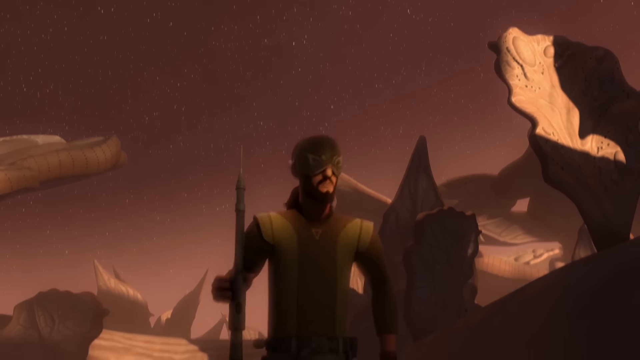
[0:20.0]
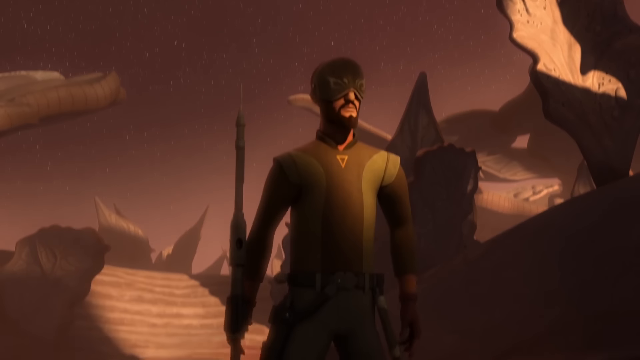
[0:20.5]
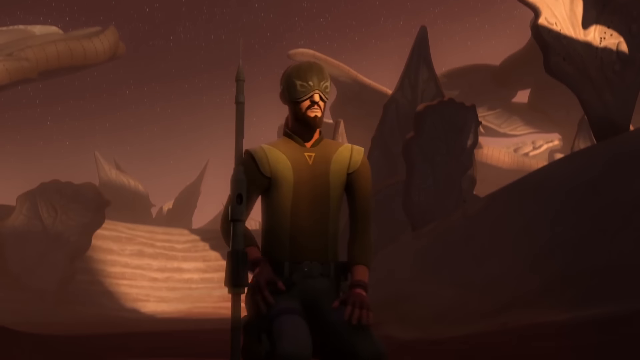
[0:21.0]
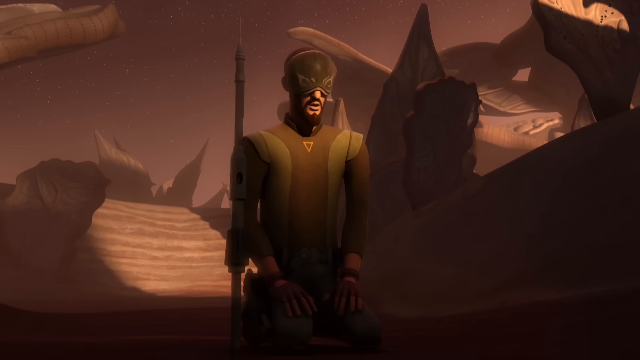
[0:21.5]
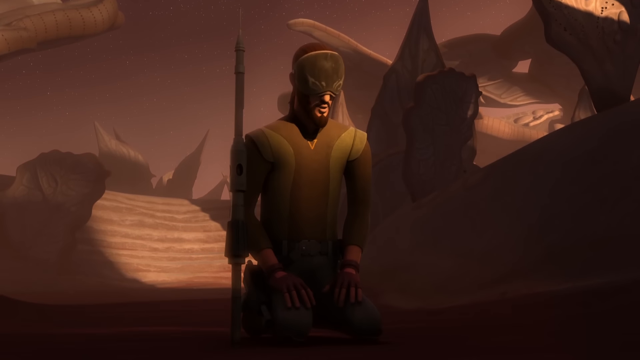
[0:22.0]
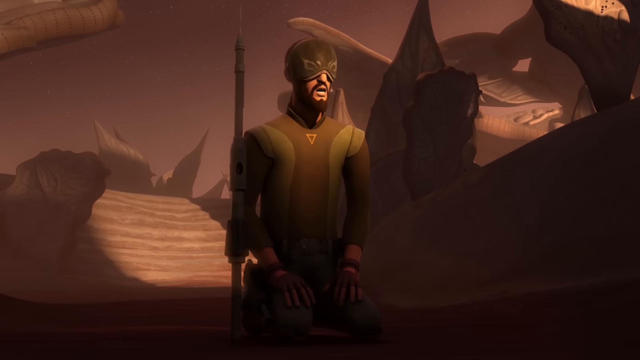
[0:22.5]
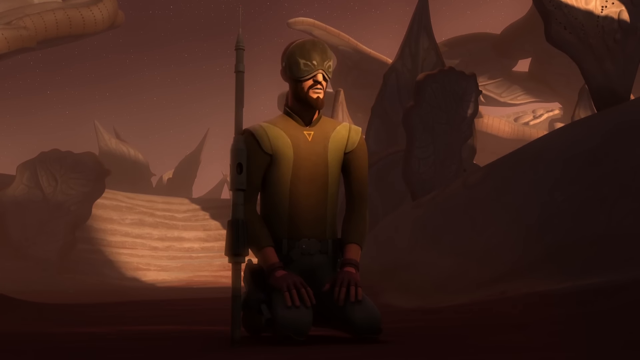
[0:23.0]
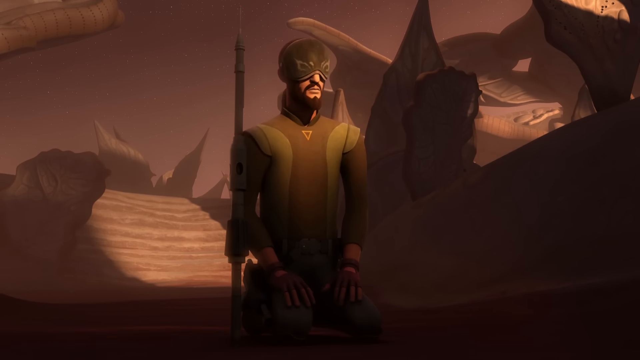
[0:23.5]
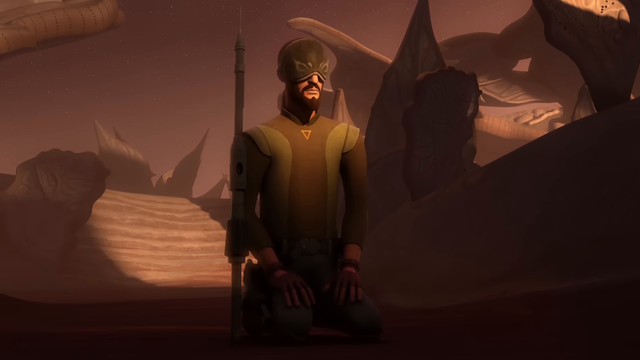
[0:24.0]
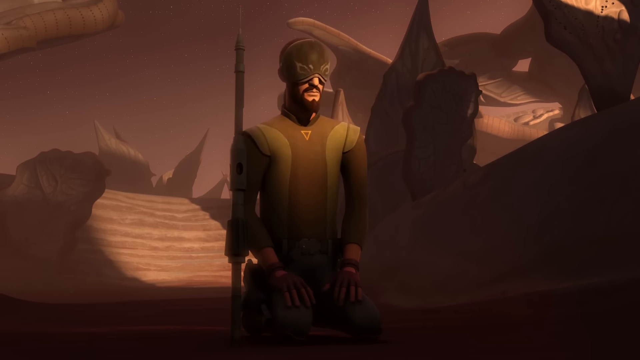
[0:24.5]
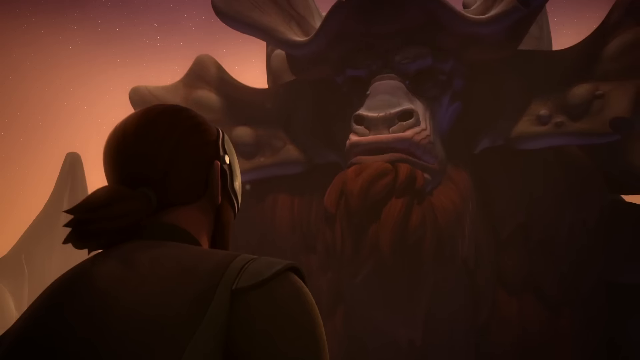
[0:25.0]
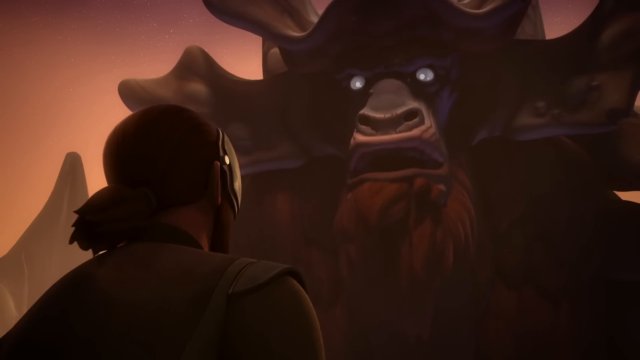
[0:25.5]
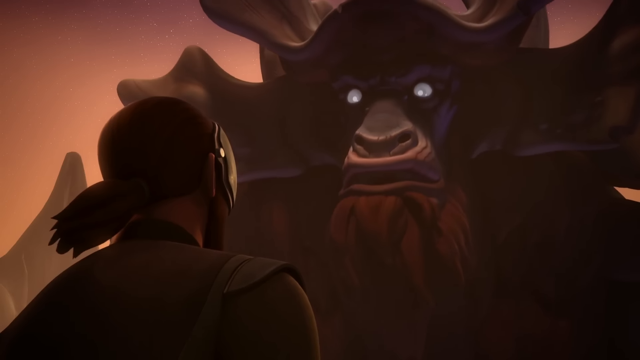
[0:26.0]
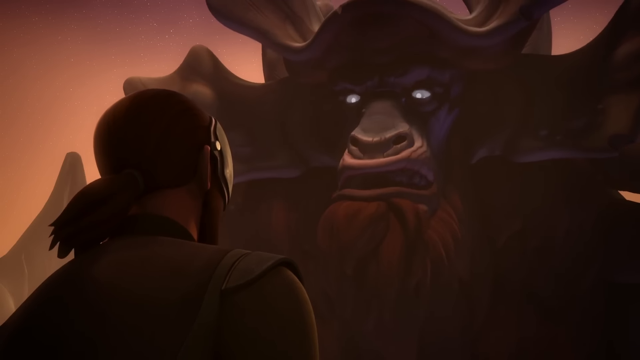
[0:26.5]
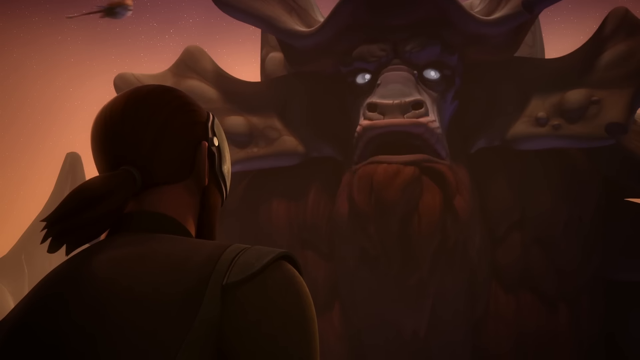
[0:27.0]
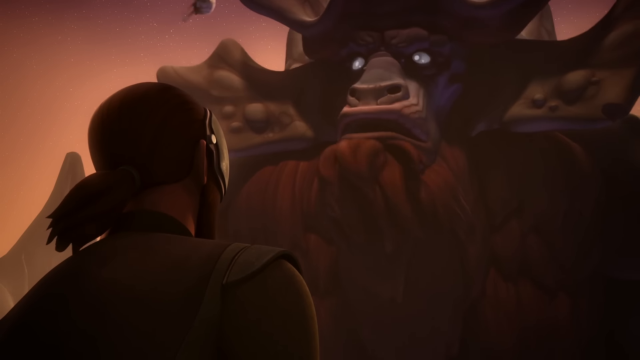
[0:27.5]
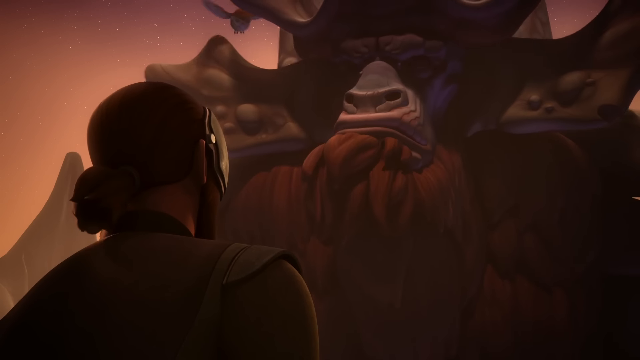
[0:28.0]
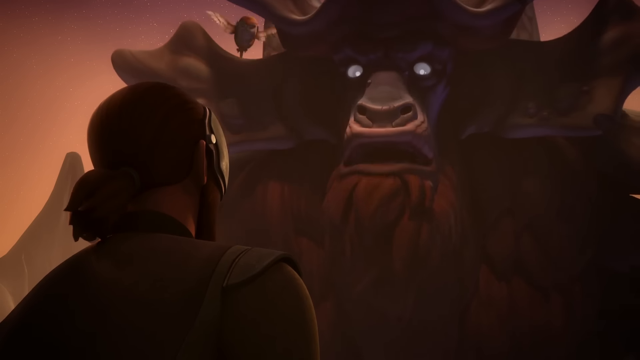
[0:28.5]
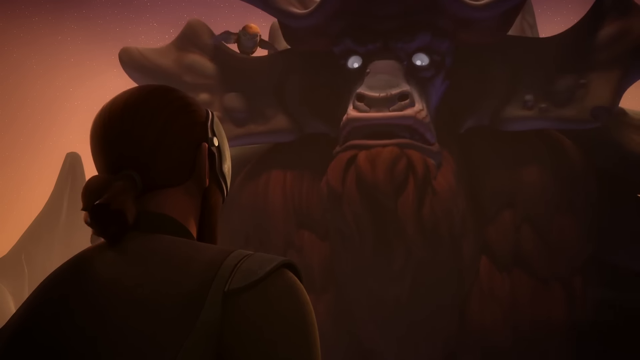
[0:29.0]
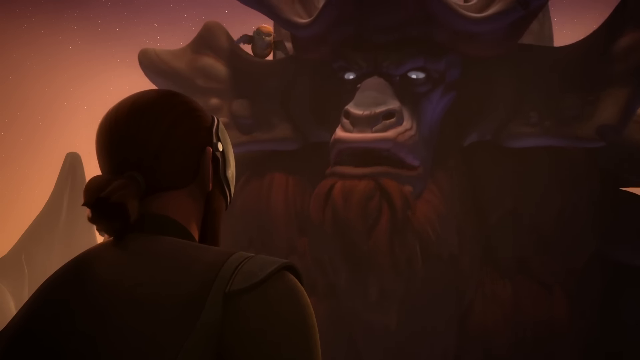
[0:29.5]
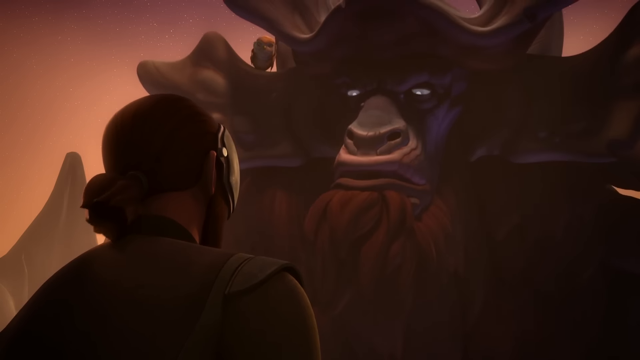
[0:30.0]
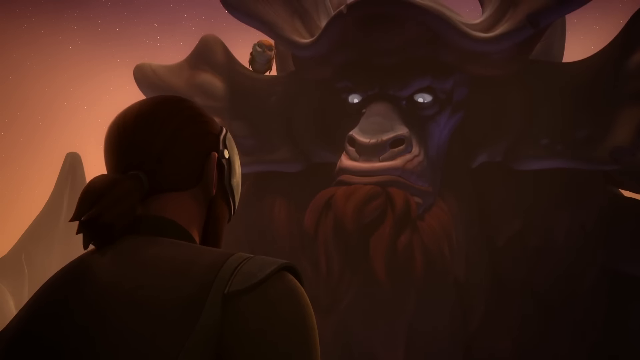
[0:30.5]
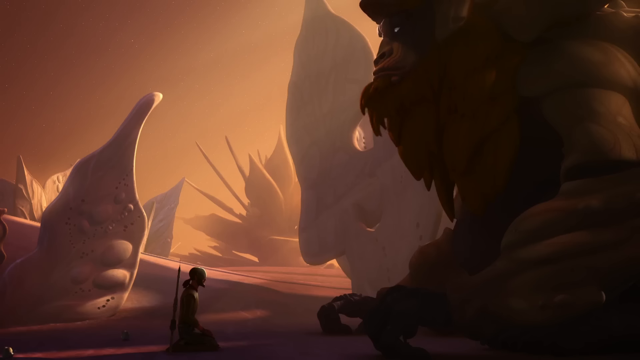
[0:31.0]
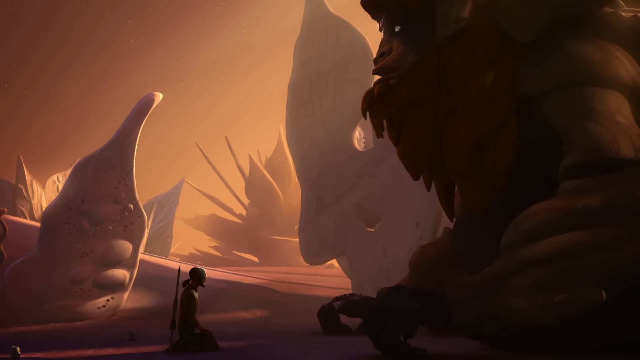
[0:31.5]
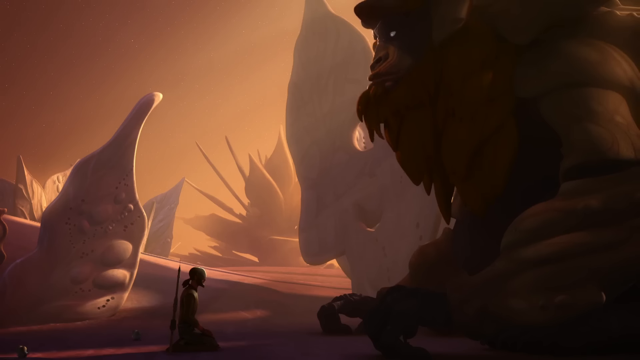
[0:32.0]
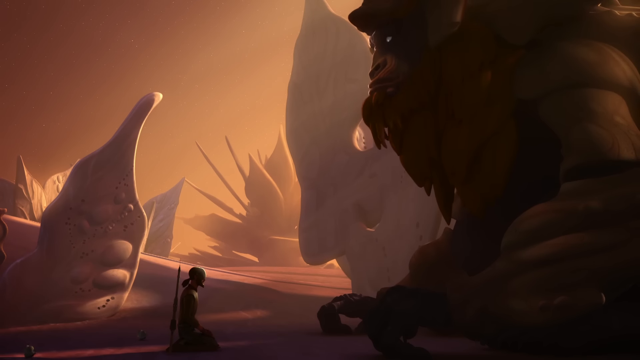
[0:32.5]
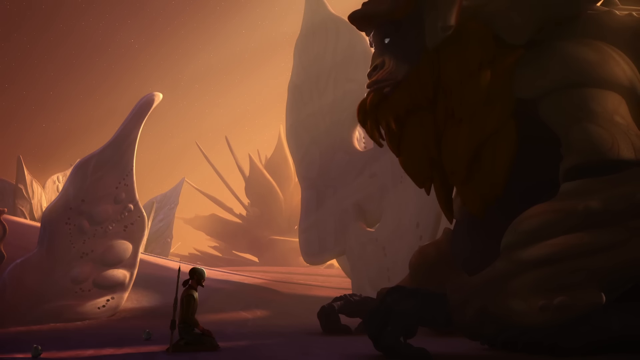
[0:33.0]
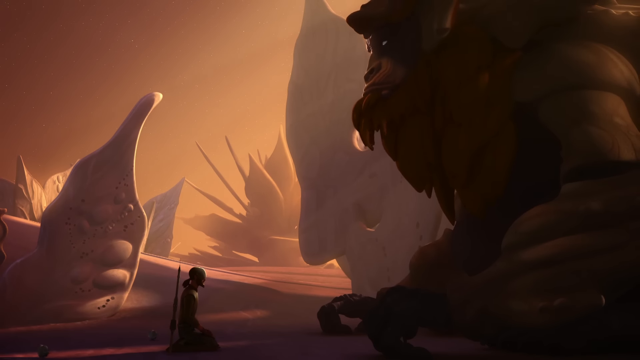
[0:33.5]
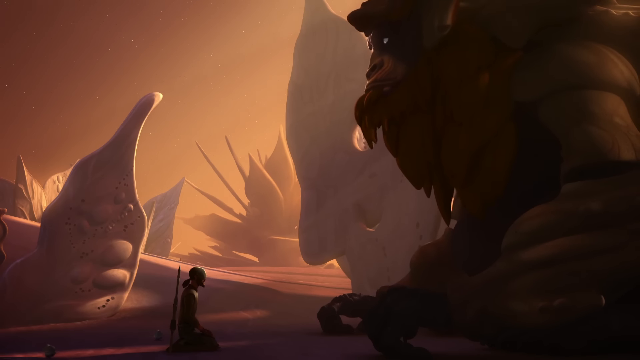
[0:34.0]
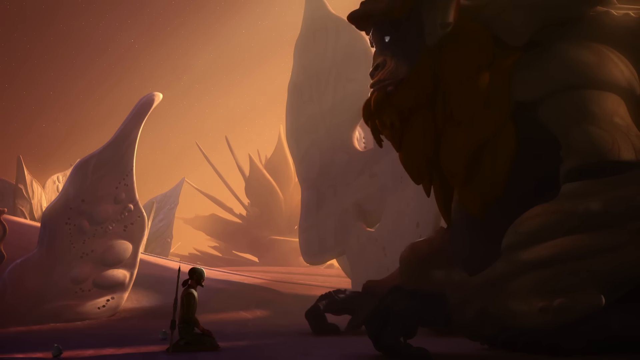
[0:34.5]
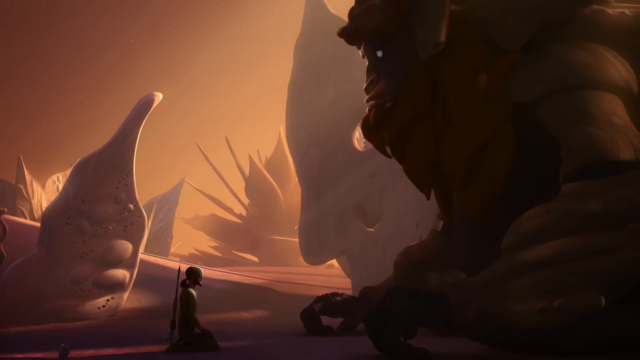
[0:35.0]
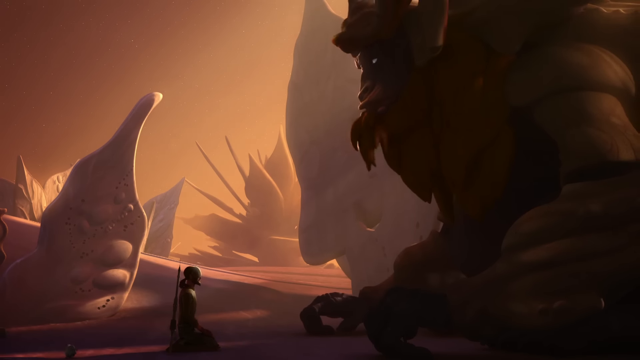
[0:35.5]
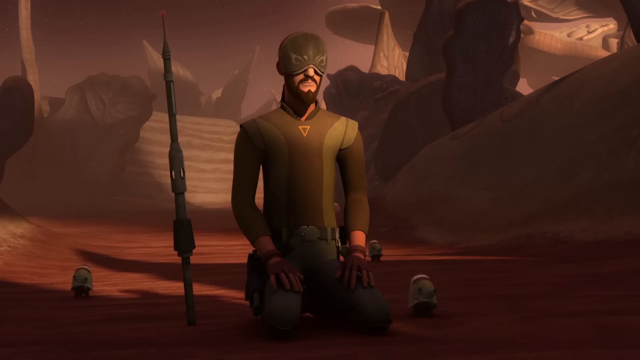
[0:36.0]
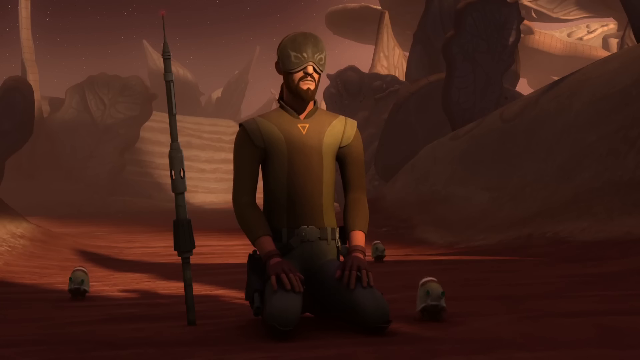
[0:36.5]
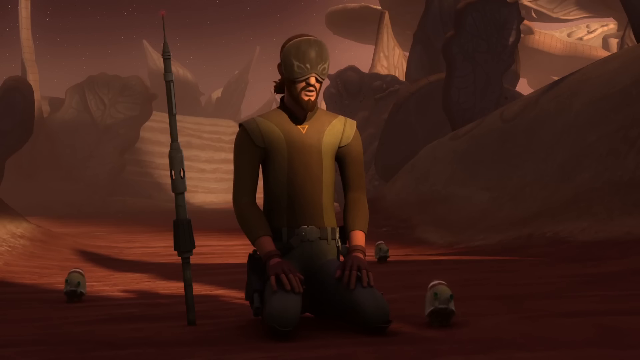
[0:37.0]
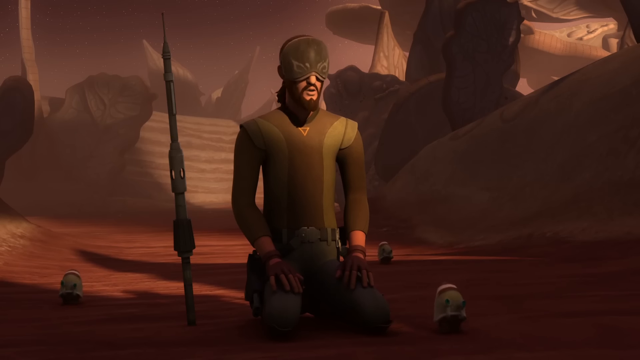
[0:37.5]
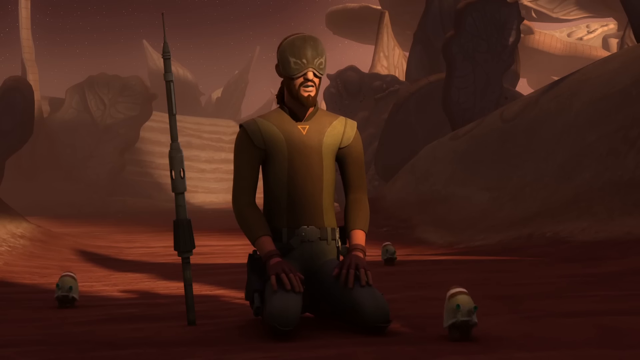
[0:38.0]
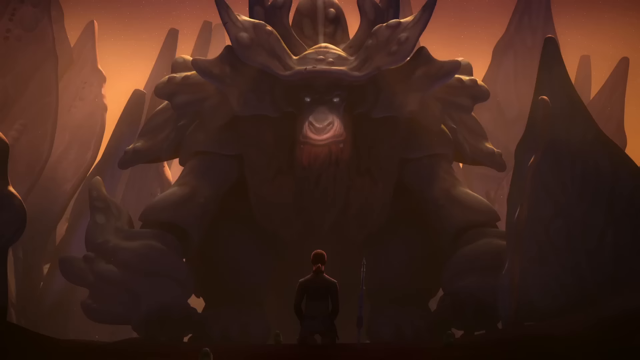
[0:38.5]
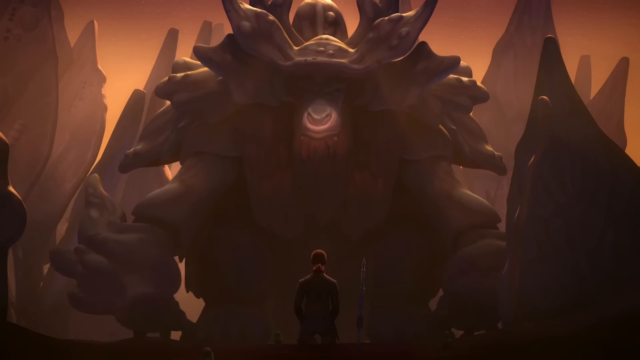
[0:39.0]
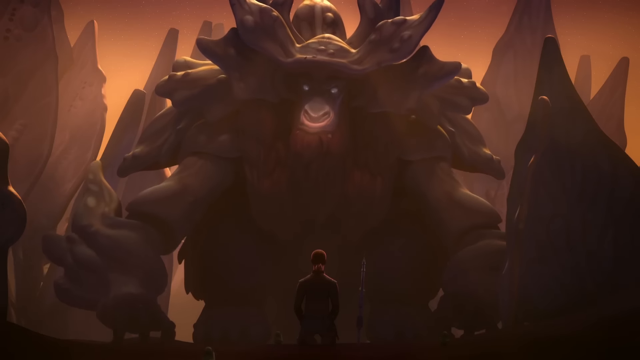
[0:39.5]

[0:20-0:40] A man wearing a face mask, with a beard, a mustache, and his hair pulled back into a ponytail, stands in the center of the screen with some sort of weapon in his hands; his left hand is kind of puffed out slightly, hanging beside him. He wears a uniform of some kind with a brown stripe down the middle and a yellowish vest over the top. The background shows large stone leaves and decorative shell designs. The man squats down on his knees with one hand on each knee and leans forward as if begging or paying honor, tilting his head slightly. The view turns to reveal a very large beast in front of him, with huge horns coming out the sides of his head, large white eyes, and the face of a bull. He looks very much like a minotaur but is the size of a mountain, and a small owl is perched on his horn. The monster looks very friendly and does not seem to be attacking. He holds one hand down low in front of the soldier and then starts to rise.